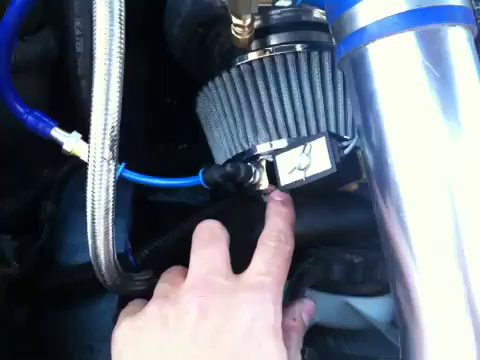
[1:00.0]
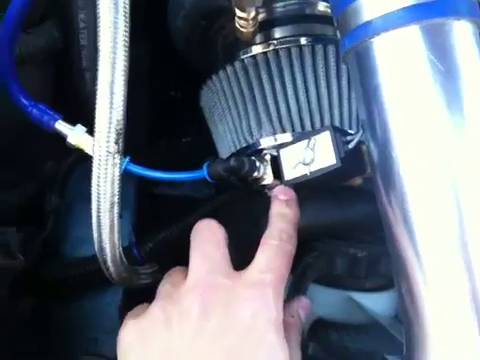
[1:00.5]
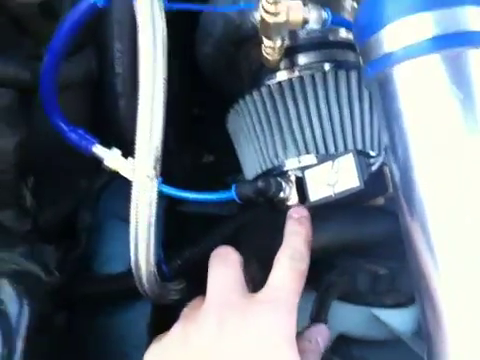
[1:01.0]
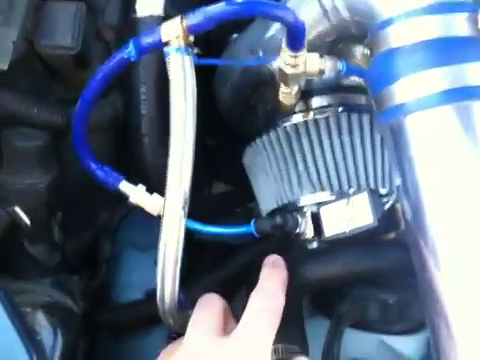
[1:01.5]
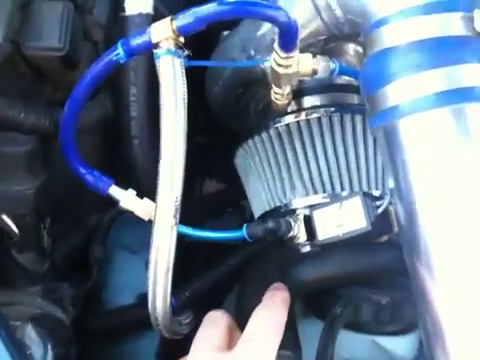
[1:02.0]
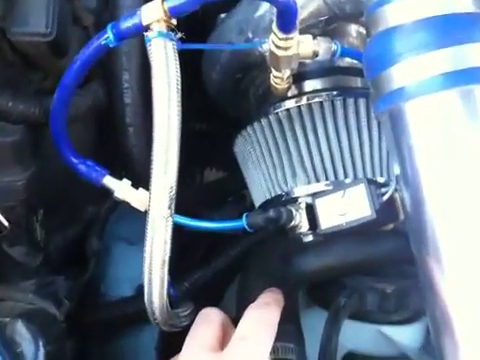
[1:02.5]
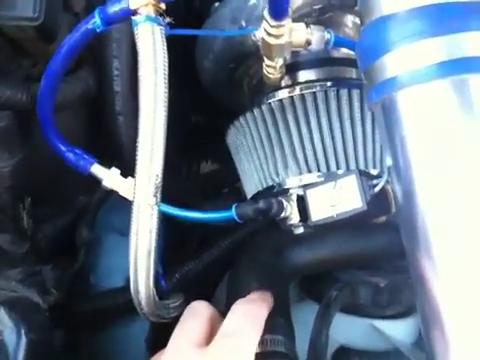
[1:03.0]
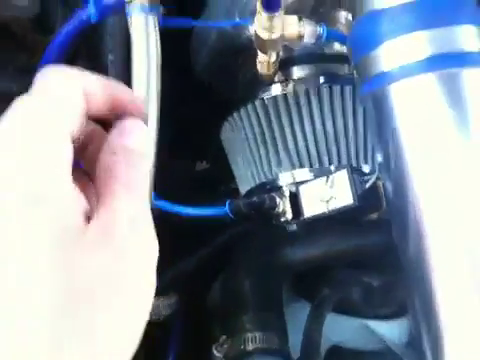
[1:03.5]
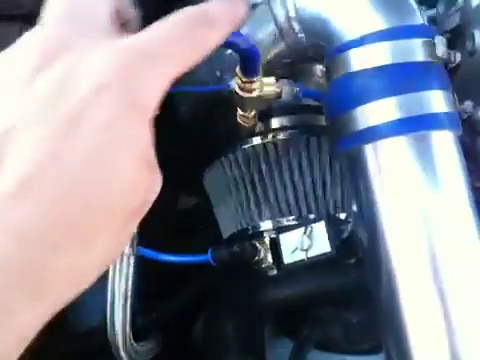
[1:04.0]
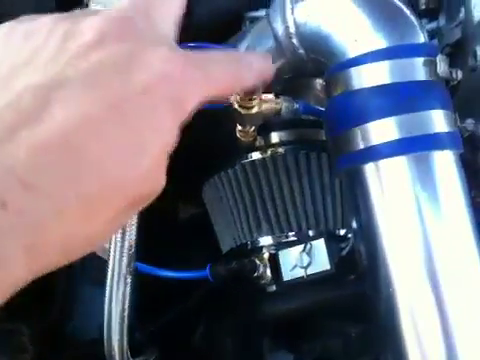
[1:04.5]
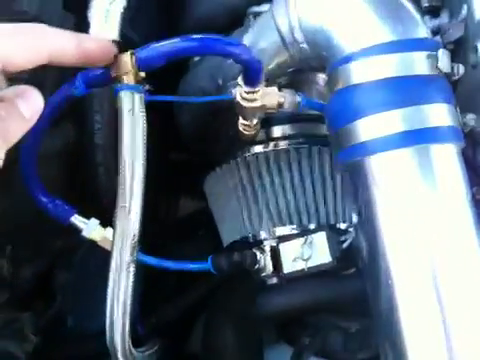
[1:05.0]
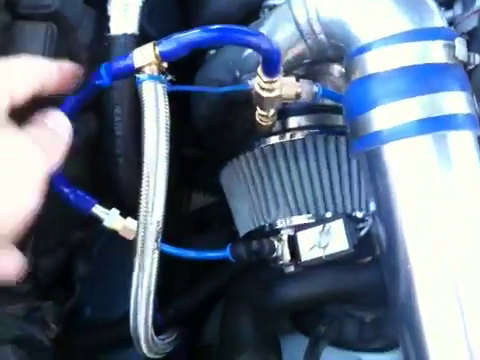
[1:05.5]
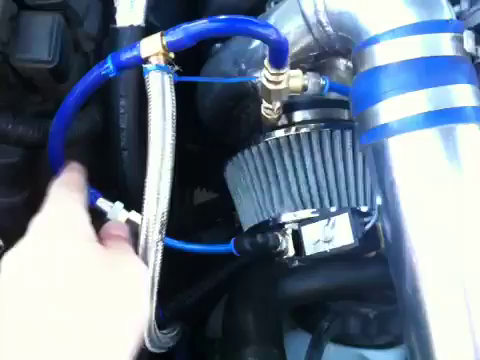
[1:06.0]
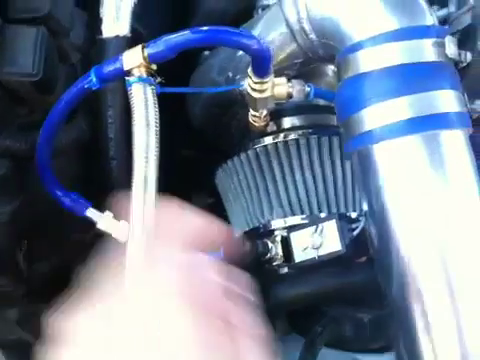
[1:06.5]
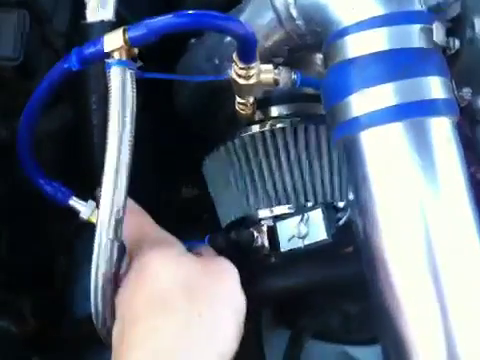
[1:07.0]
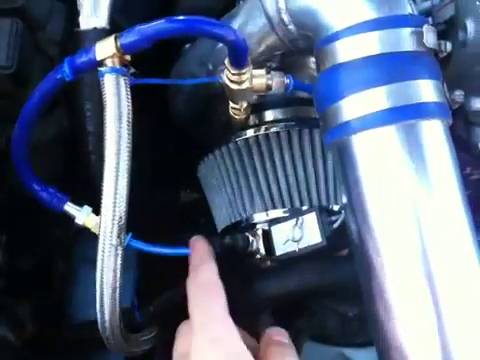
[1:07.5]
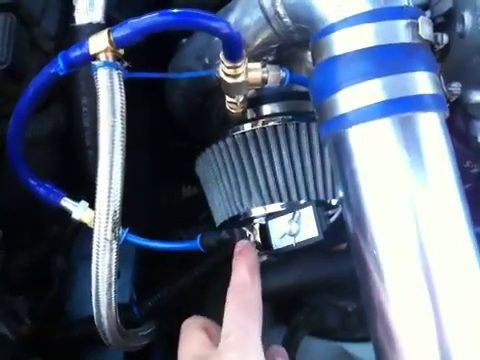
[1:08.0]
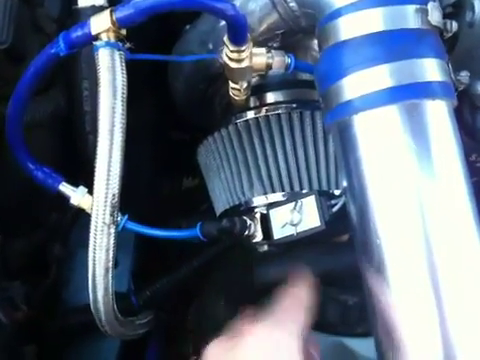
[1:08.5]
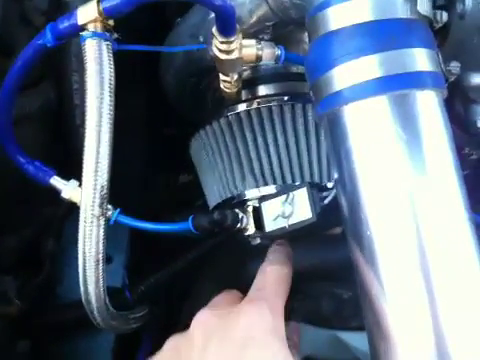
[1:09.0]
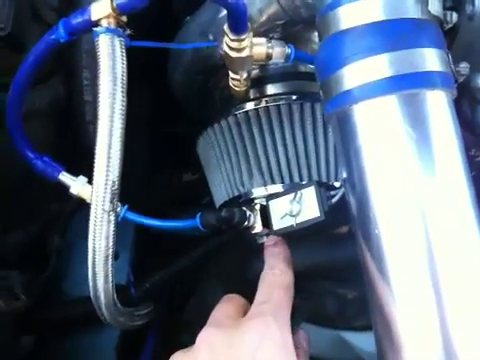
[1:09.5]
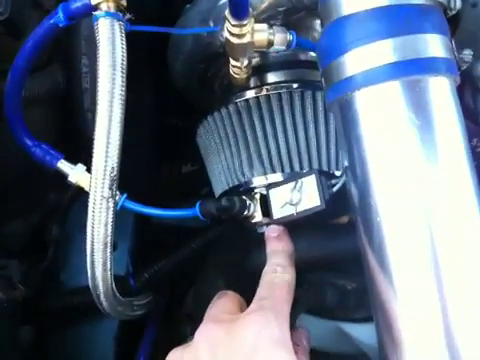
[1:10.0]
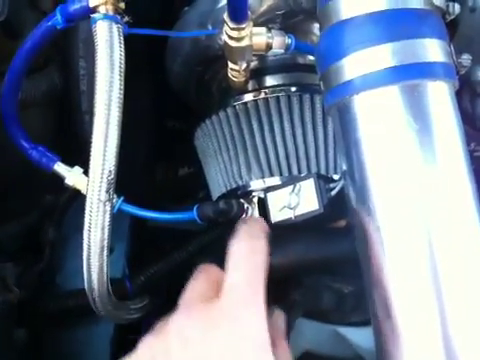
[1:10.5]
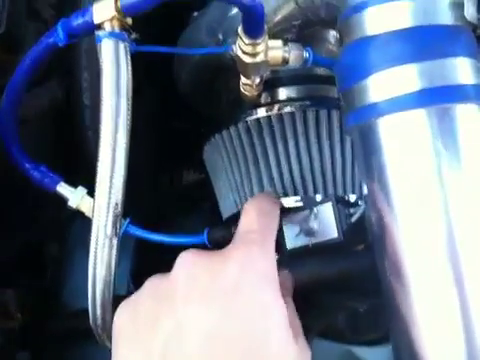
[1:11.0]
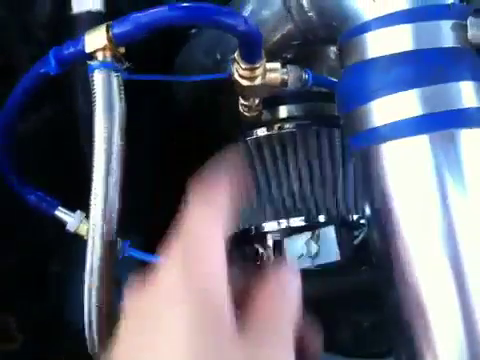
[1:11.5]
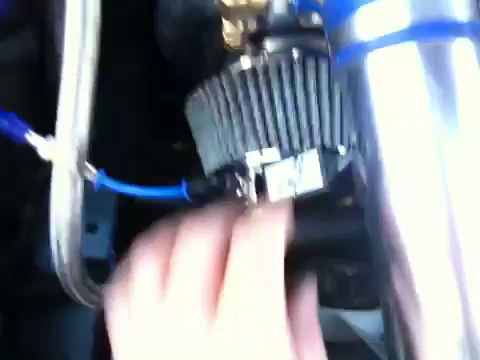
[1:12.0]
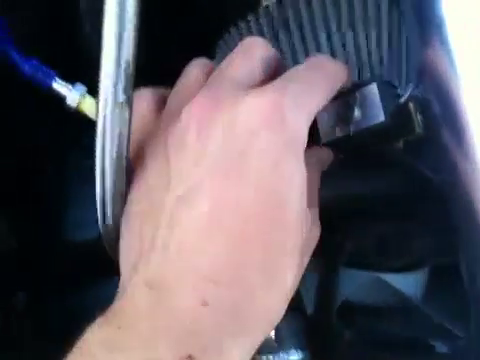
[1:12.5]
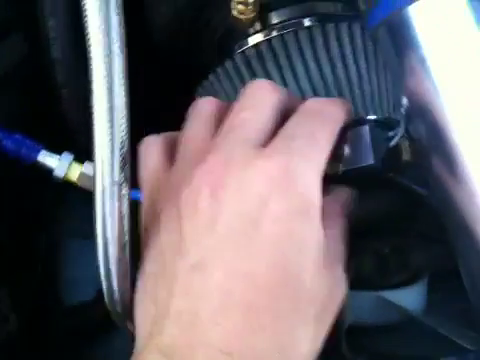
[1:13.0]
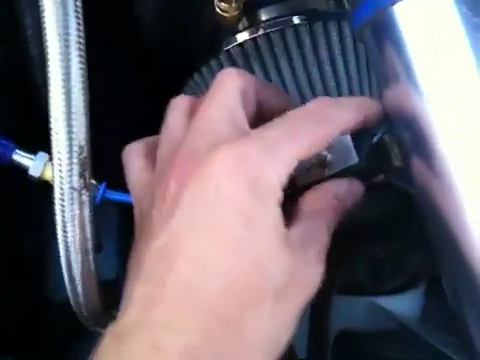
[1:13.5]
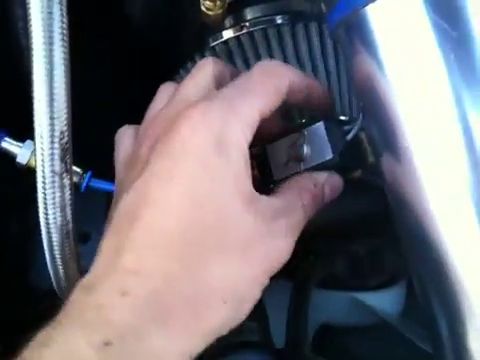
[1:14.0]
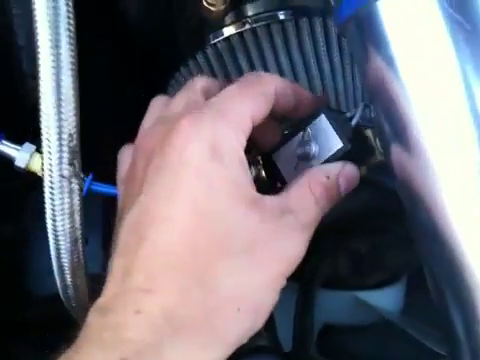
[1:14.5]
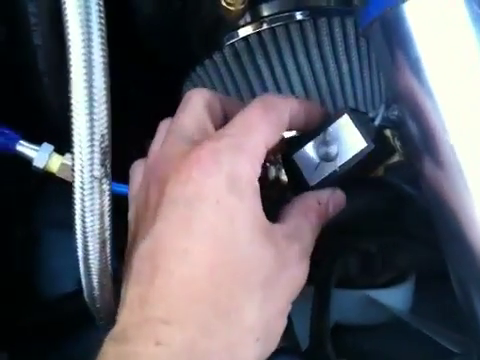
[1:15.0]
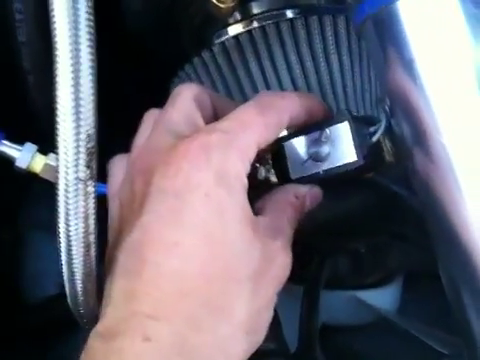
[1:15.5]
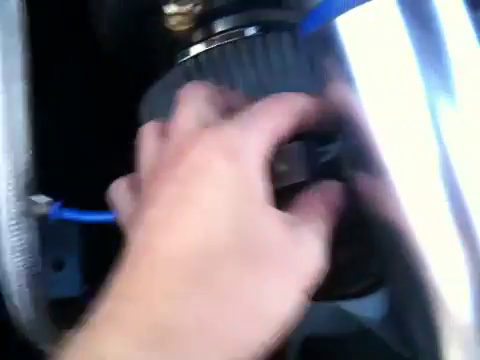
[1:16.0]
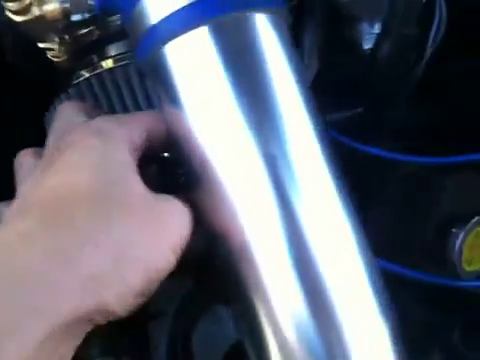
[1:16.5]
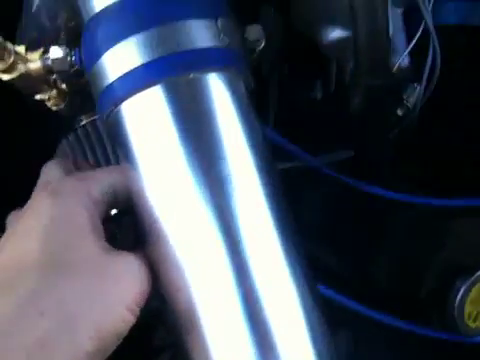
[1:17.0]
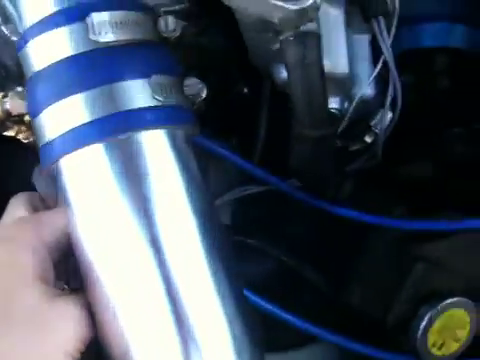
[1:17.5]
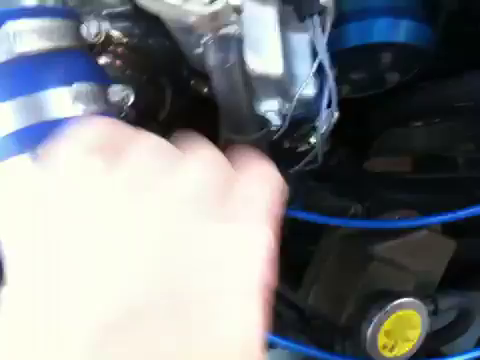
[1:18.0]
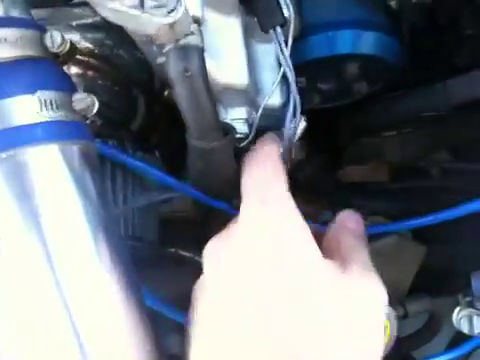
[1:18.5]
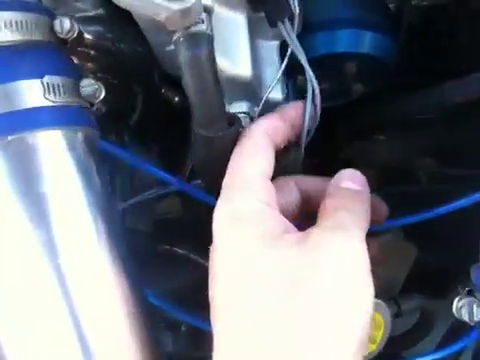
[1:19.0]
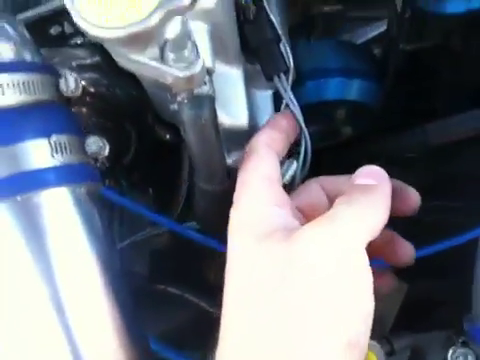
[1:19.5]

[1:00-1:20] The man uses his left index finger to point out additional blue wiring that twists and turns and connects to a large section of the hood. He touches a rectangular object with a silver body and a black outline and spins it left and right. He then moves to the right, past large, shiny silver piping with blue stripes, to a new section where numerous silver, string-like wires connect to a black section on the right side of the hood. He touches these wires with his left index finger, seeing where they lead. His hand is pale.